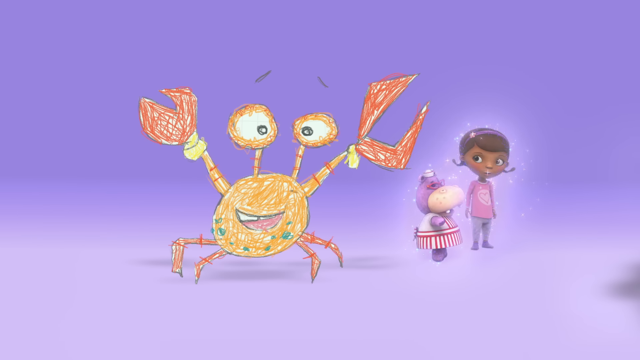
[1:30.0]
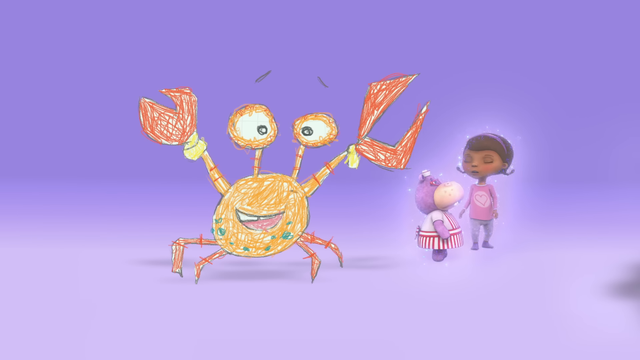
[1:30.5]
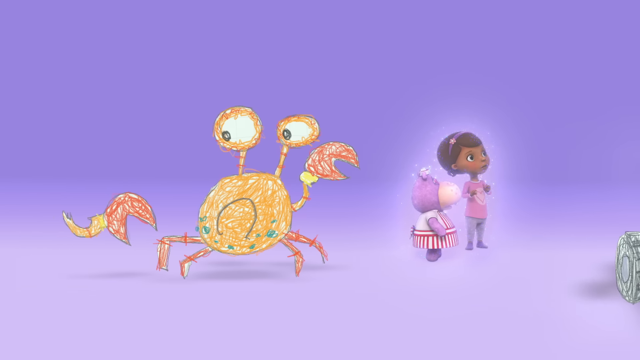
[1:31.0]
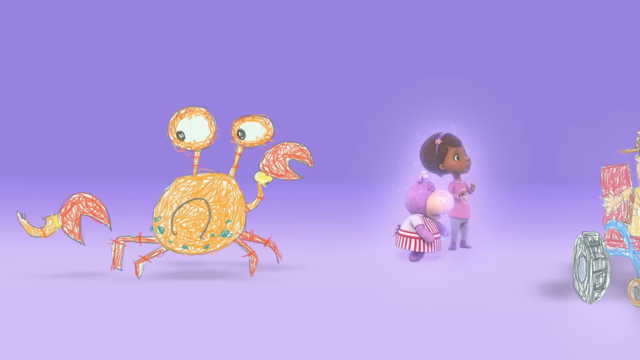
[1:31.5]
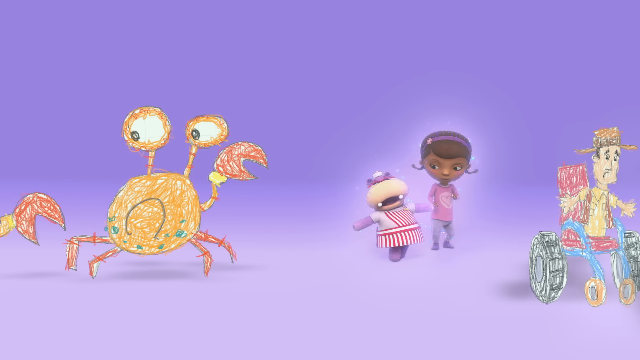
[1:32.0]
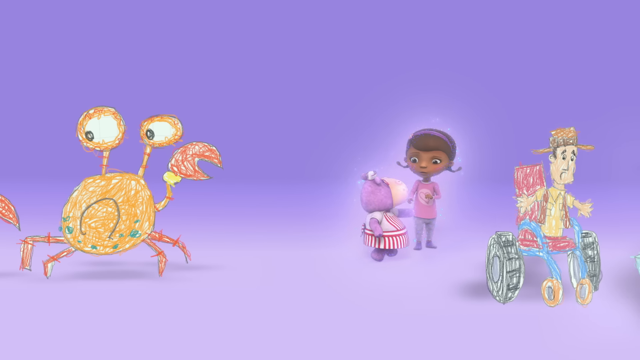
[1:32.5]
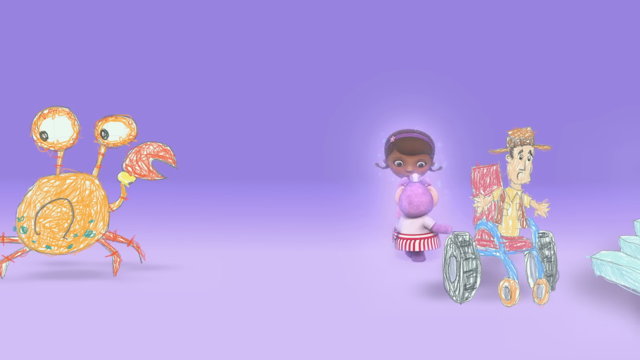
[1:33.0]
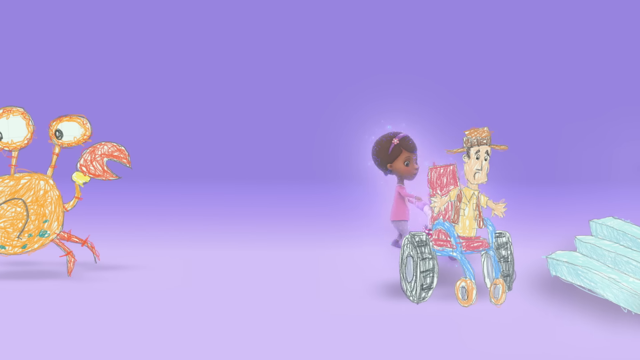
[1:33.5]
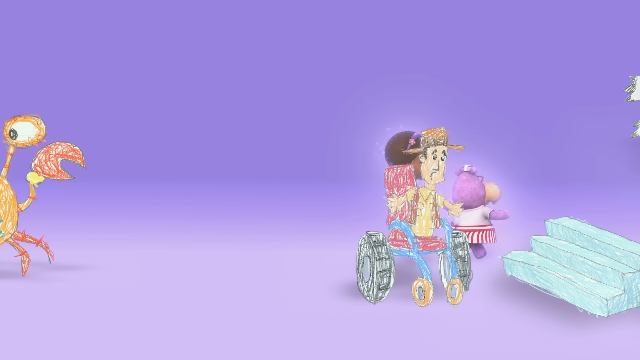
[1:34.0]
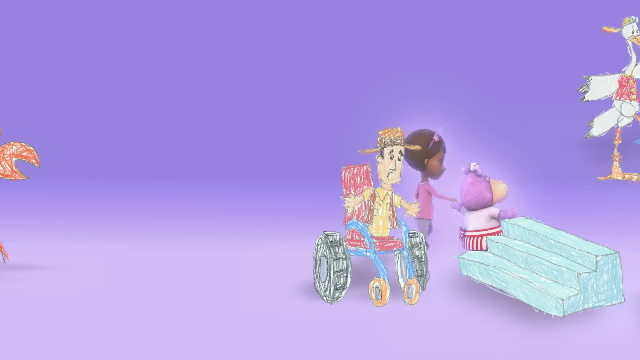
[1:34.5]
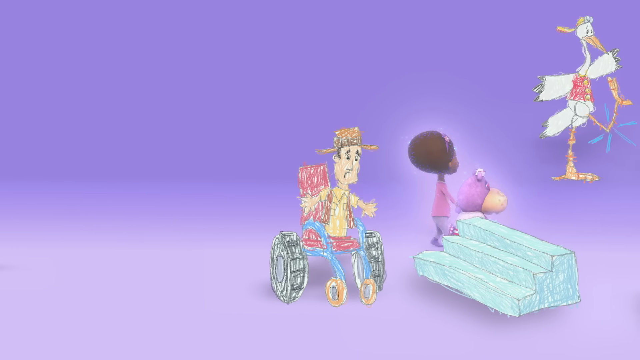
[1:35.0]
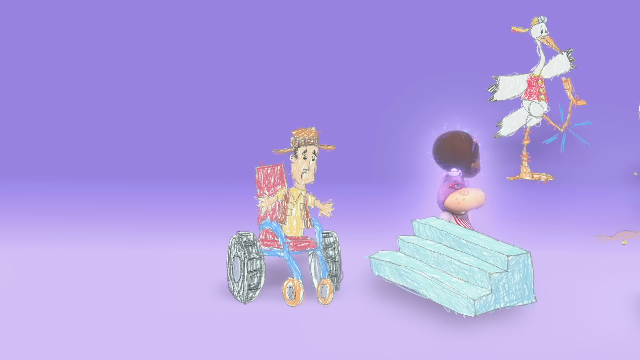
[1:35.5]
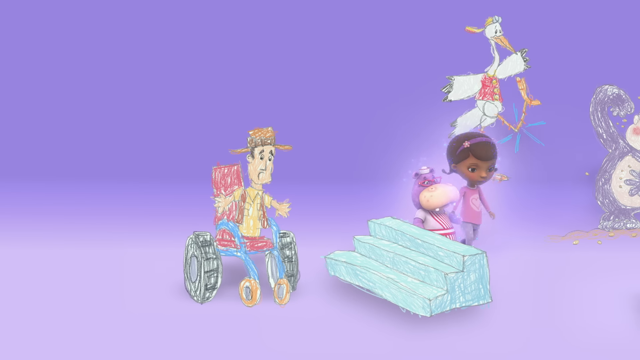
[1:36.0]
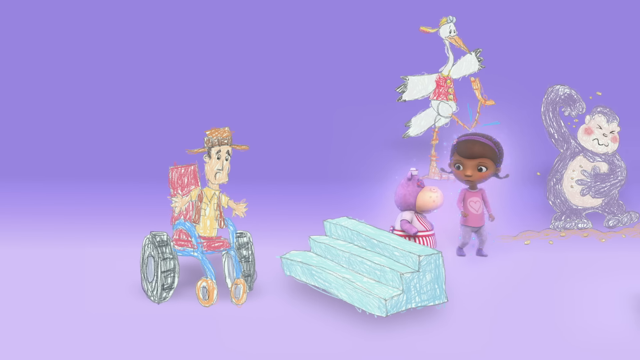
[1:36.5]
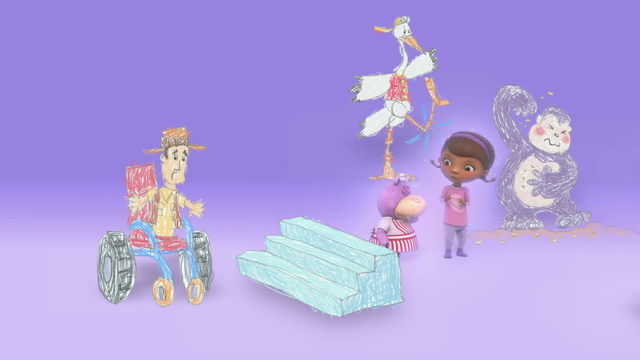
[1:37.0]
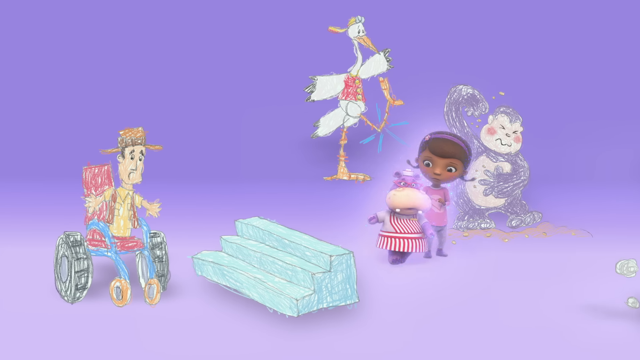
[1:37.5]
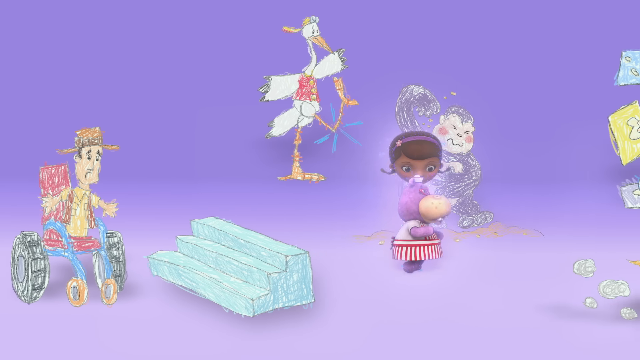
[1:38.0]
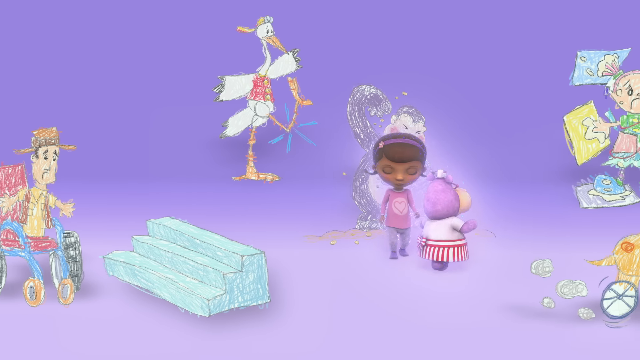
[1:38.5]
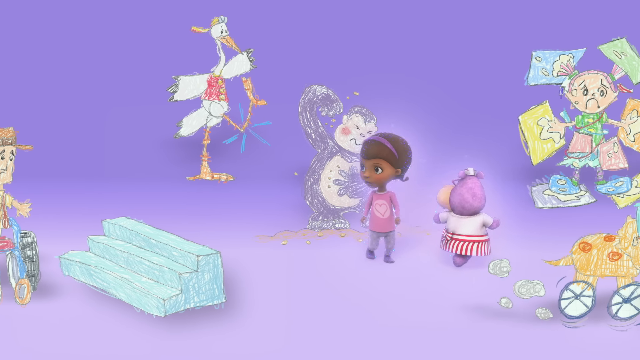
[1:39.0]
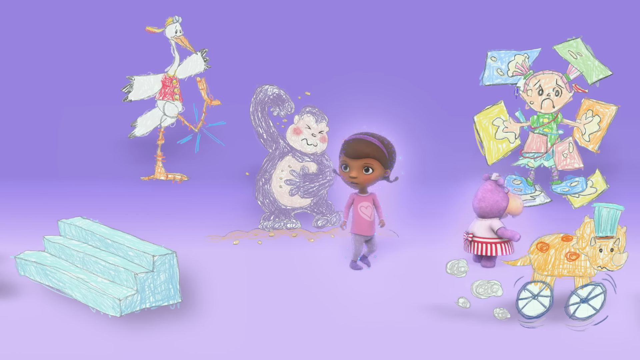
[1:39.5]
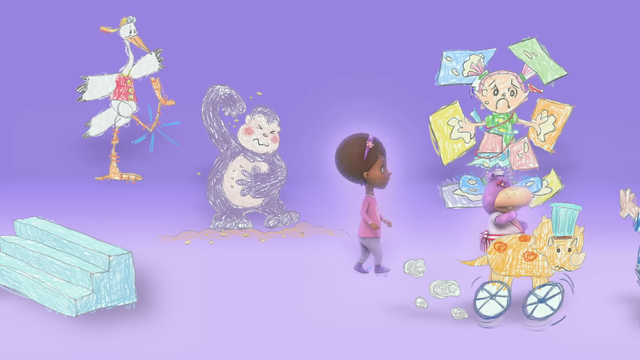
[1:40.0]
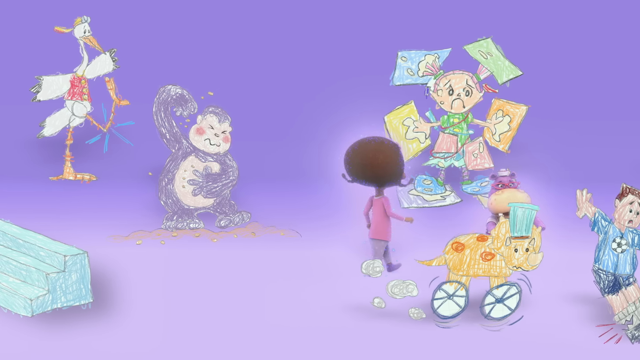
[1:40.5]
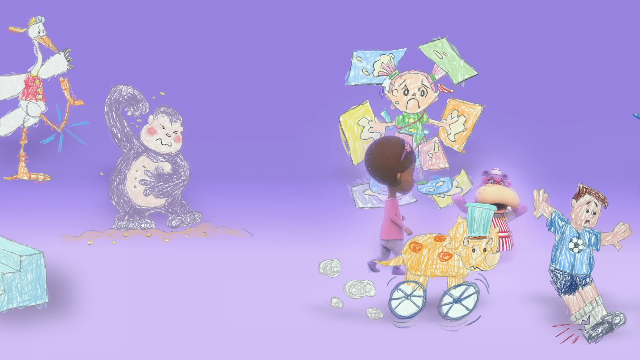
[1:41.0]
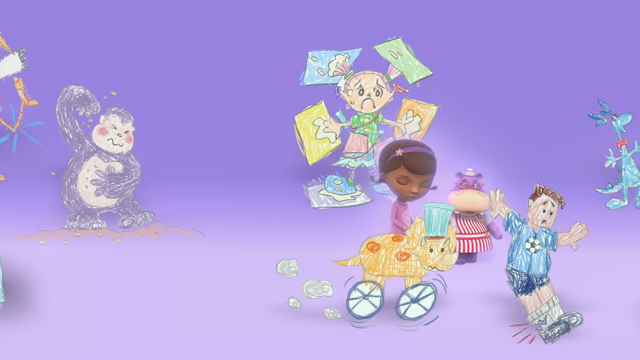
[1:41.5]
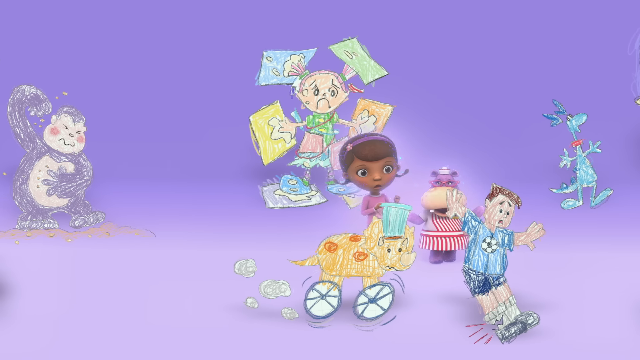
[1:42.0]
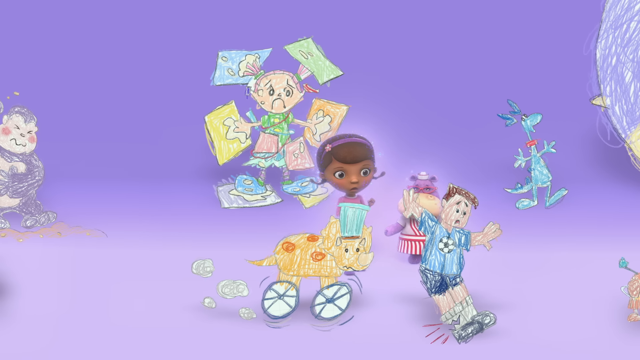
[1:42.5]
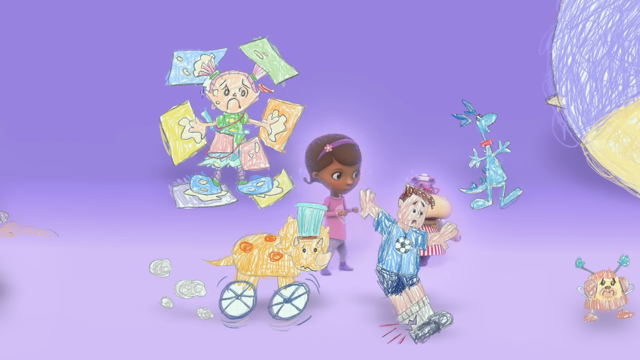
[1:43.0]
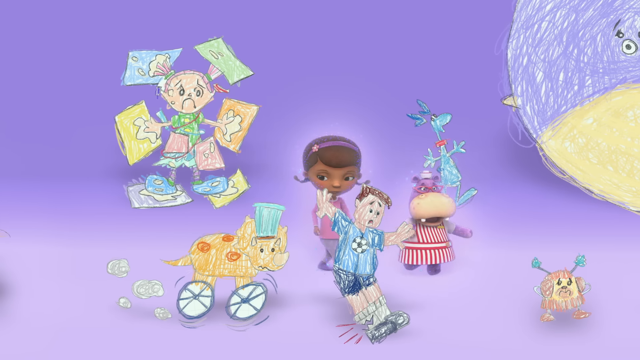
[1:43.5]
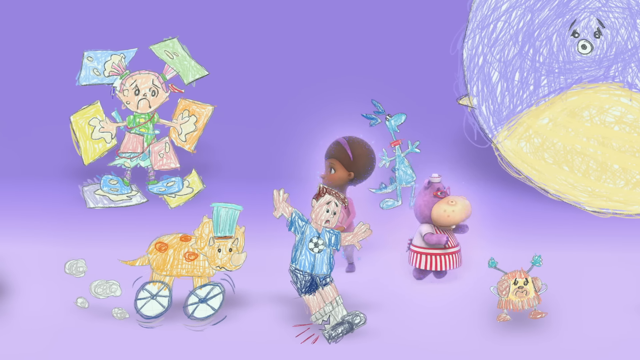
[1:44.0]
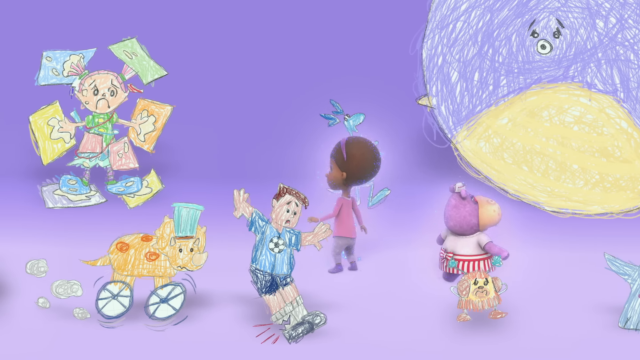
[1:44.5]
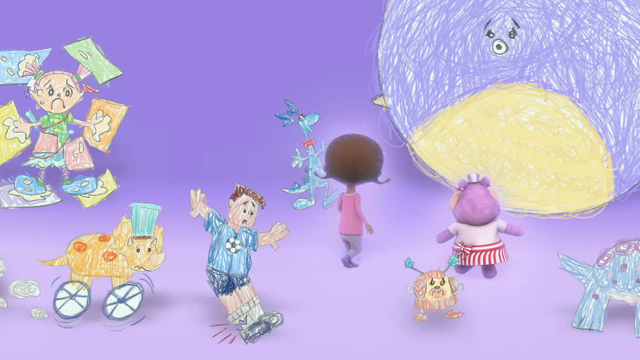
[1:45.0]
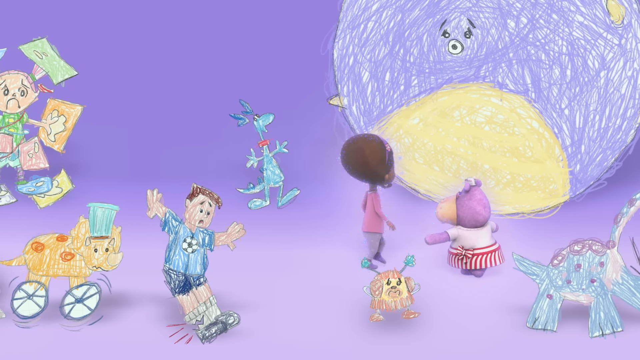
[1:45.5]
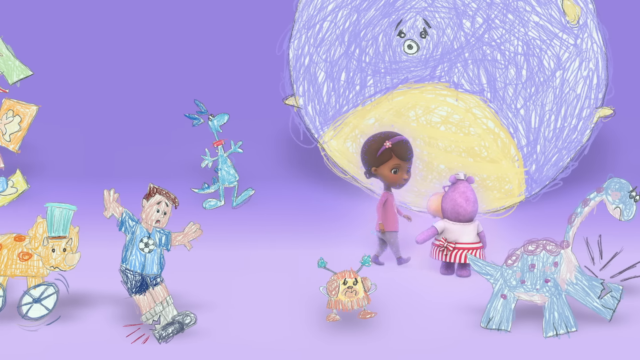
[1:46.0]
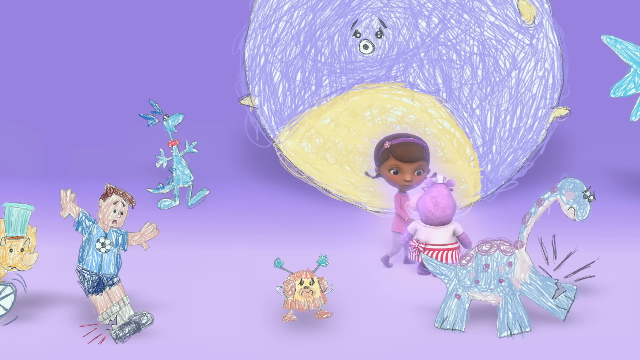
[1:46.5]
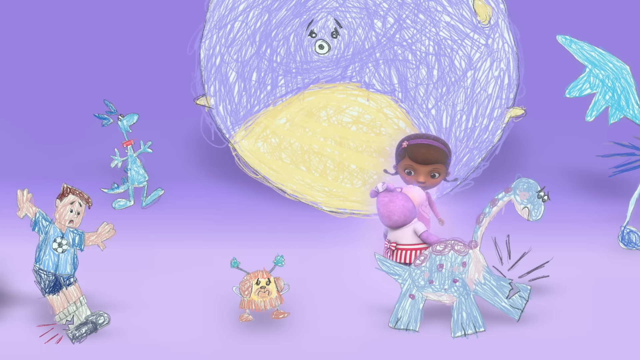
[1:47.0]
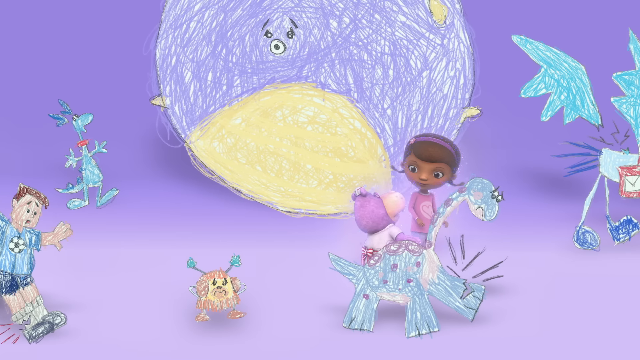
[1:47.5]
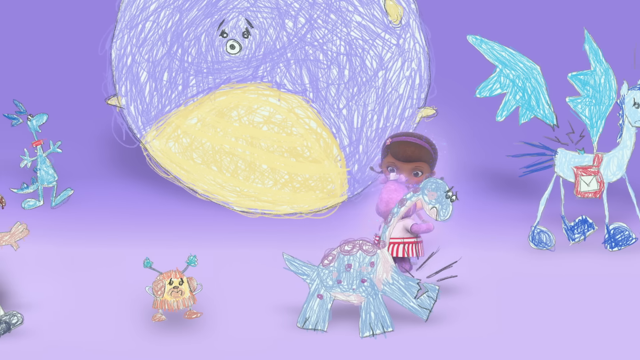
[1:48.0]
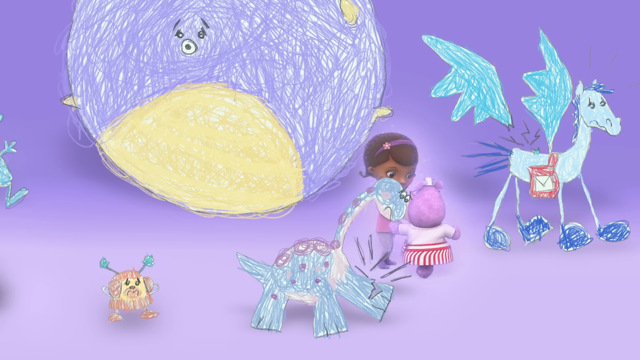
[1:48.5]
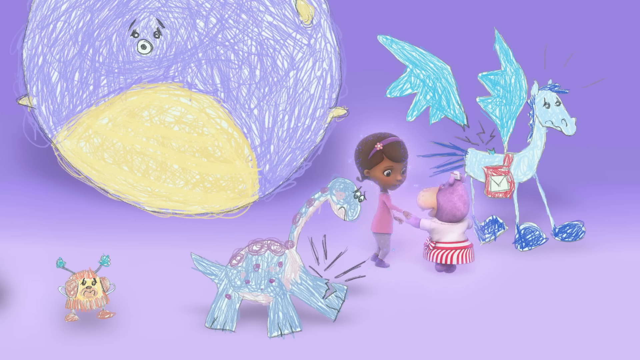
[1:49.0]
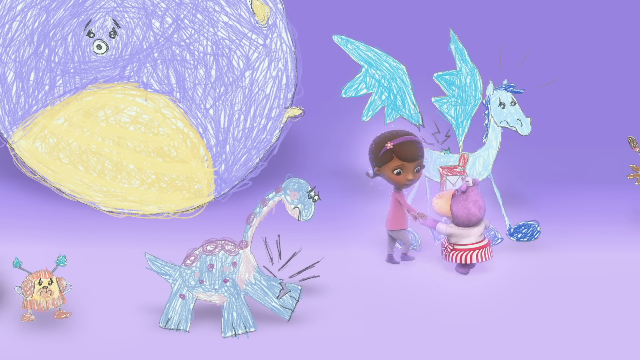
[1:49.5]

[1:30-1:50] The crayon drawing of the crab continues, with white eyes, yellowish coloring and orange pincers, against a purplish-blue-white background. The little girl, maybe a black girl, whose skin looks a little darker in this sequence, wears a pinkish shirt and purple shoes. The hippo has a purplish face and a white and red outfit. This seems to be the little girl's dream sequence. The view moves over to a yellowish man in a wheelchair with green wheels and yellow wheels in the front, all in a crayon-looking drawing style. It then moves to some green stairs, then to a turkey or a stork delivering a child, then to a gray and white monkey. Next is what appears to be a little girl and a pet; the girl, wearing green, has little drawing papers all around her, and in the lower right-hand corner is something like a dog on wheels. A boy with brown hair appears, with what almost looks like a soccer emblem on his blue shirt, along with what could be a light green dragon. On the right side is what looks almost like a planet, the moon or earth, yellow on the bottom and blue on the top, with a nose, a face and eyeballs in a small portion of the blue part.